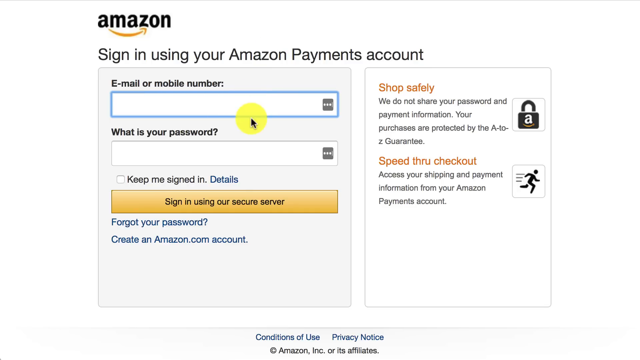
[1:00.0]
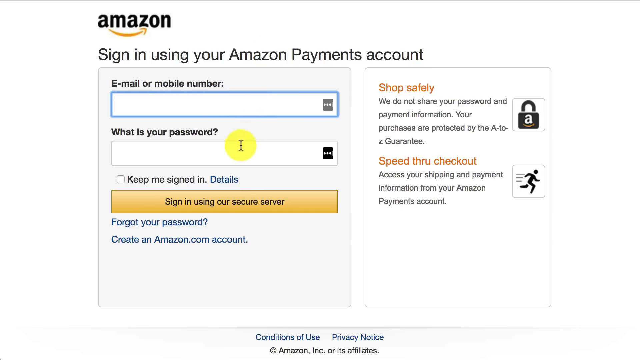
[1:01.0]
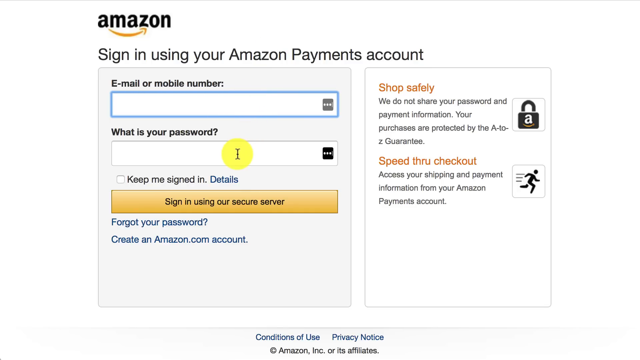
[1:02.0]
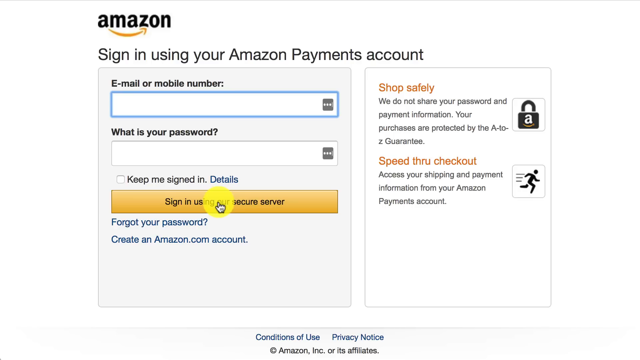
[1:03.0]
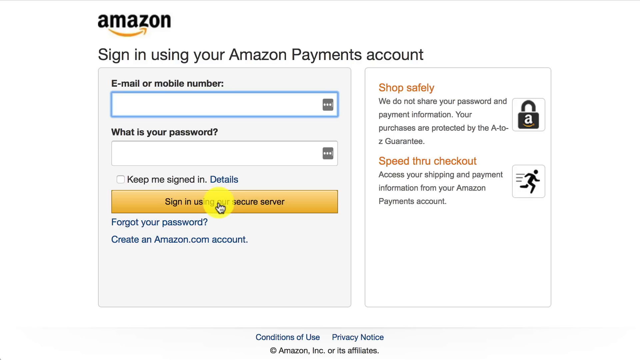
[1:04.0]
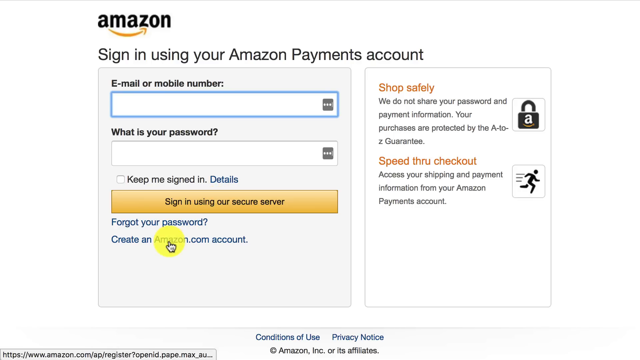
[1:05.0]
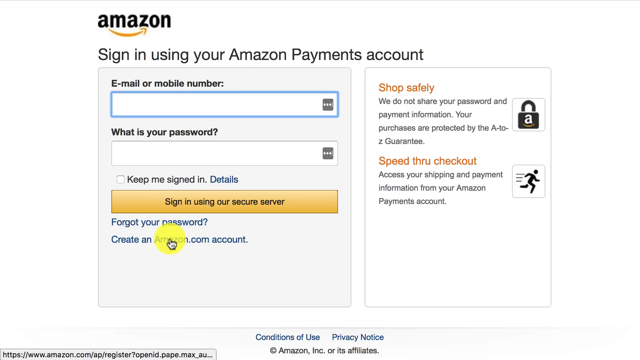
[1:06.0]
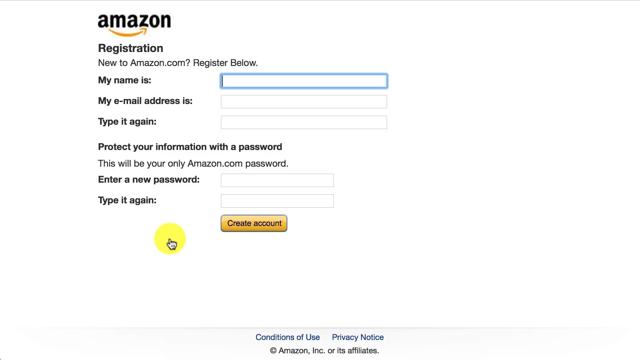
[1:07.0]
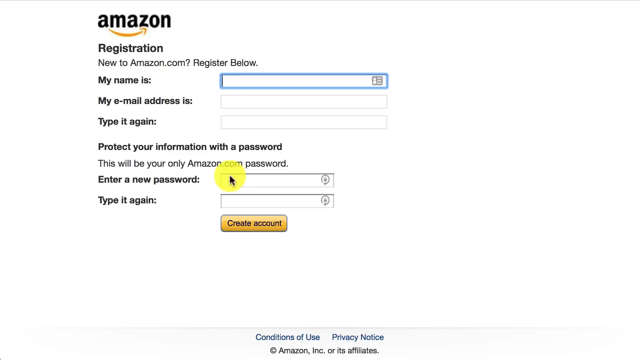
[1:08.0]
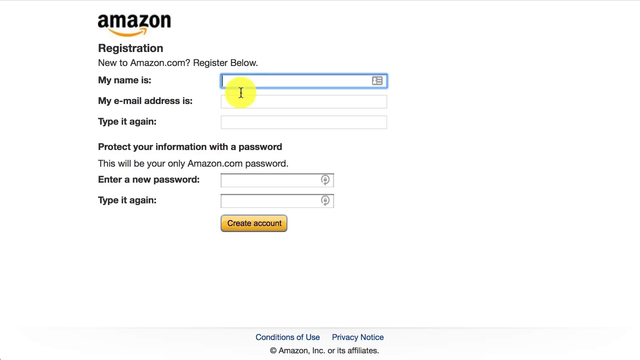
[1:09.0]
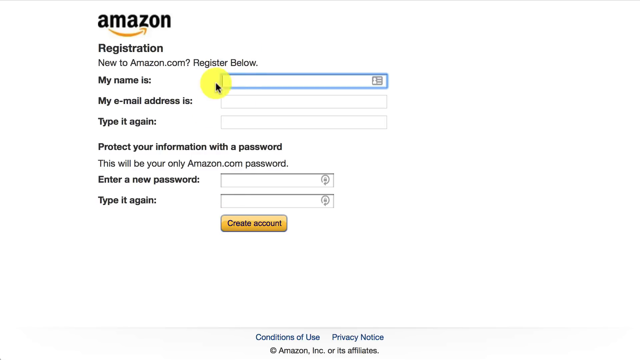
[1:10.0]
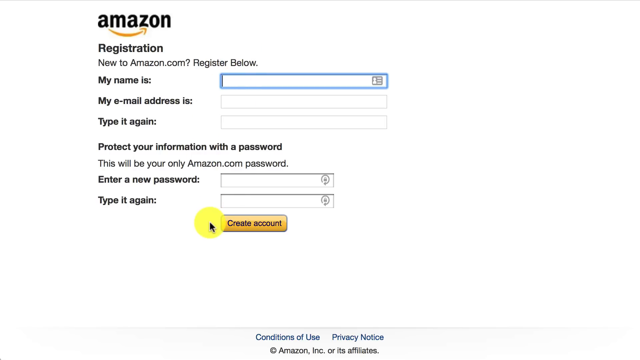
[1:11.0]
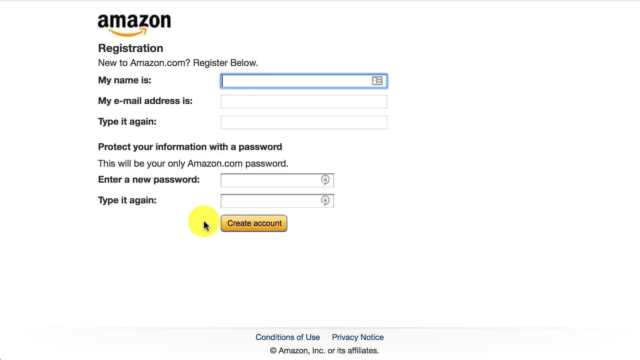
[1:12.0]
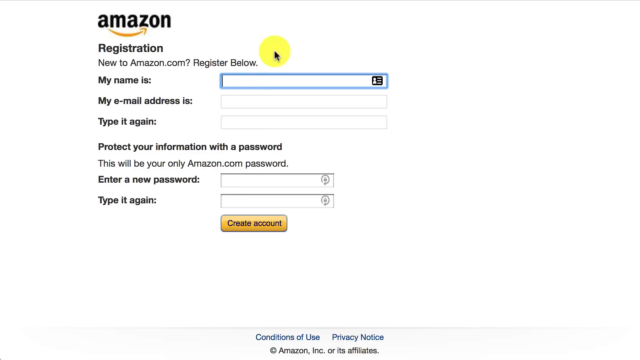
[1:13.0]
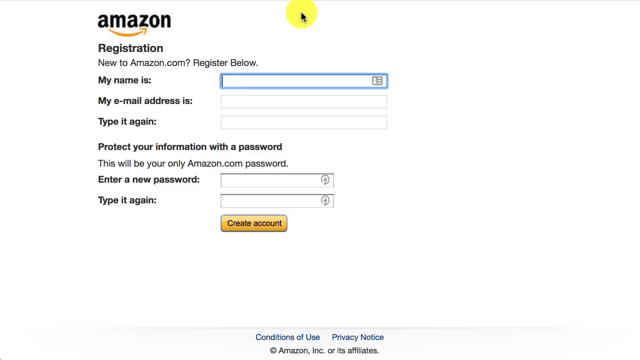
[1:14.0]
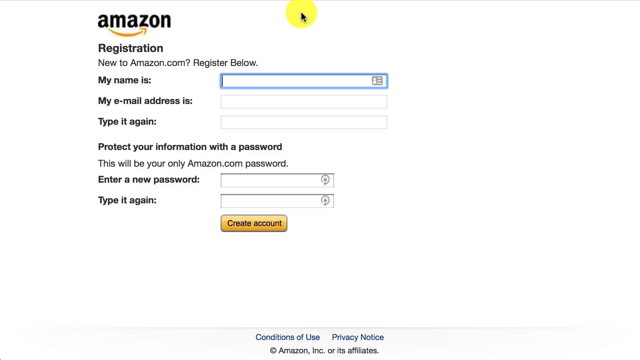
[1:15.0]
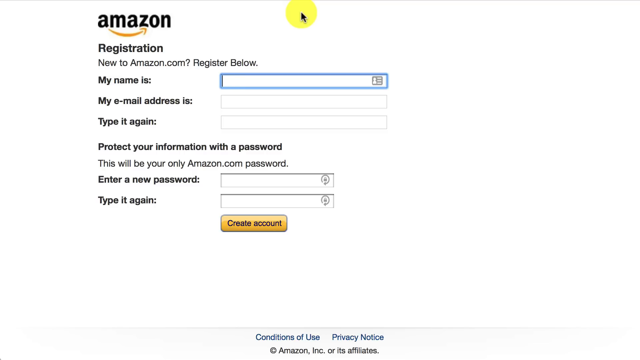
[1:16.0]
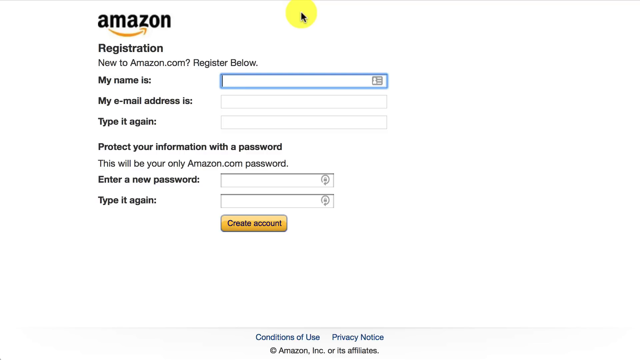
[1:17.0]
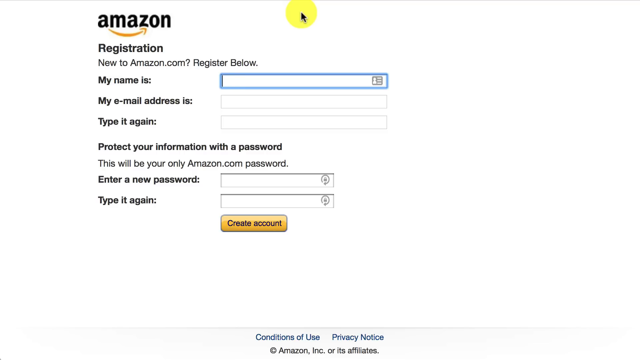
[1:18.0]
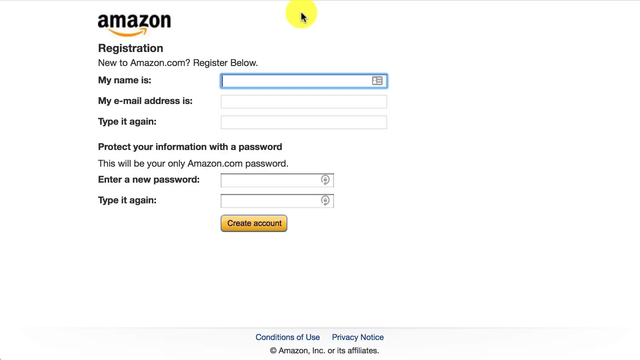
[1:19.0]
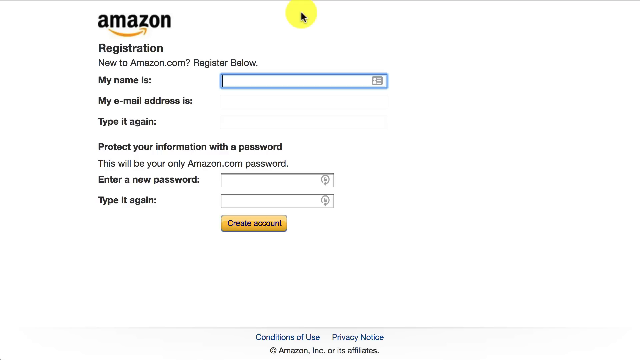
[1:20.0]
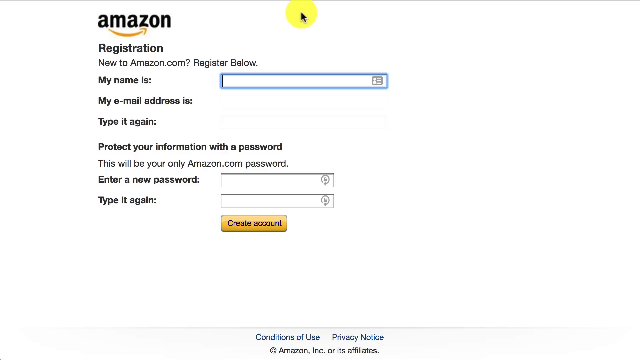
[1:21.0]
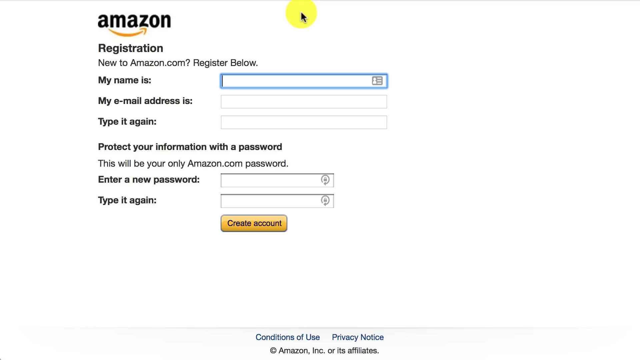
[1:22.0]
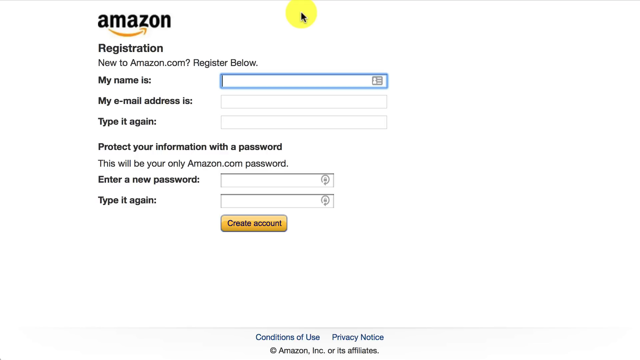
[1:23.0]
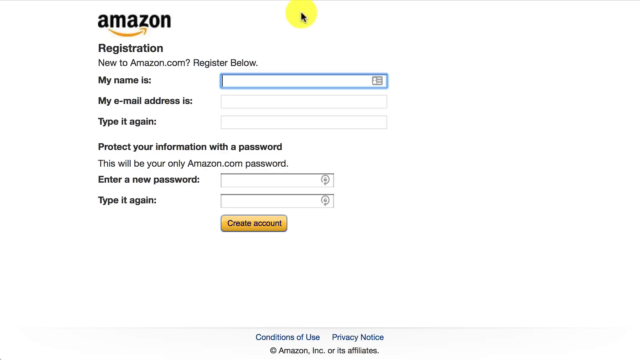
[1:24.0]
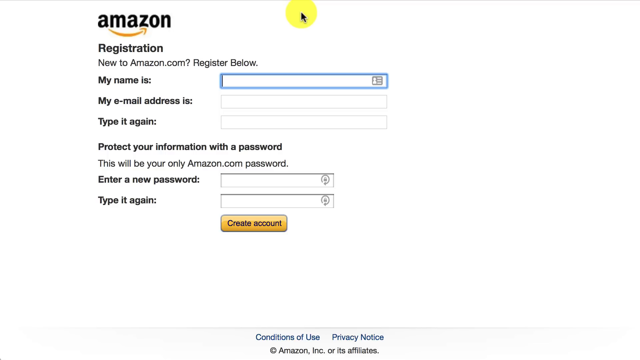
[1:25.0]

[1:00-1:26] The Amazon sign-in screen is shown, and the cursor goes over all of the clickable fields. Create an account is clicked, which leads to a registration screen reading "new to amazon.com?" and "Register below." It asks for a name and email address, the email address typed again to verify, and a password, with the text "This will be your only amazon.com password"; the password is entered twice. There is also an option to reveal the password to check that it was typed correctly. The cursor with the yellow dot moves all around the screen. The sign-up screen has a white background, asks for very minimal information, and has the Amazon logo at the top.